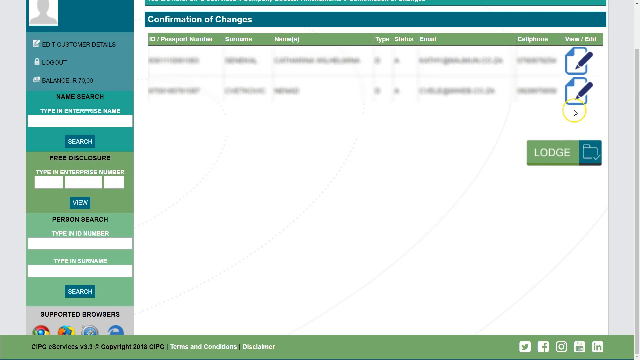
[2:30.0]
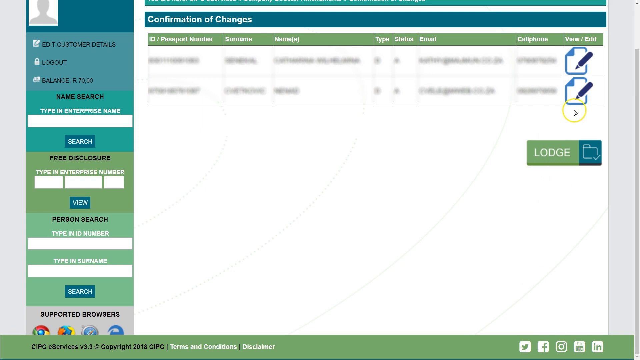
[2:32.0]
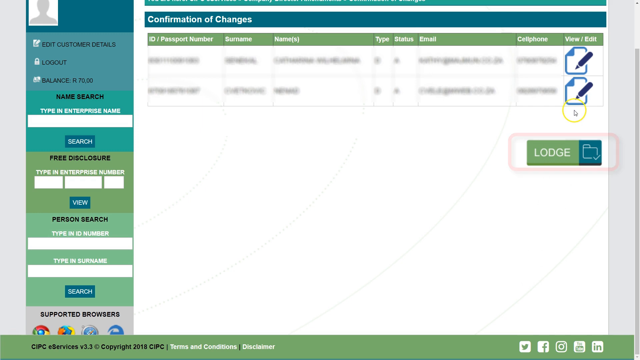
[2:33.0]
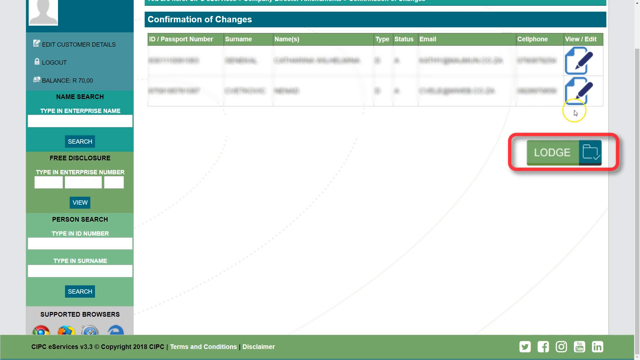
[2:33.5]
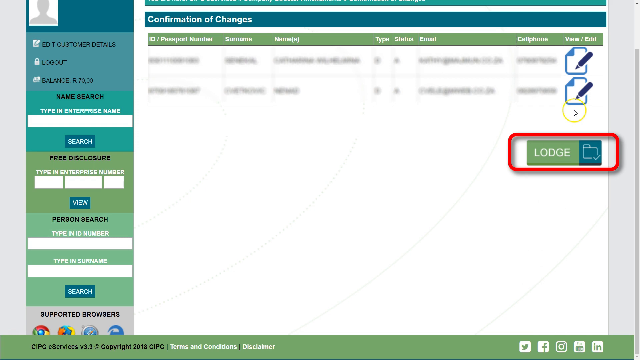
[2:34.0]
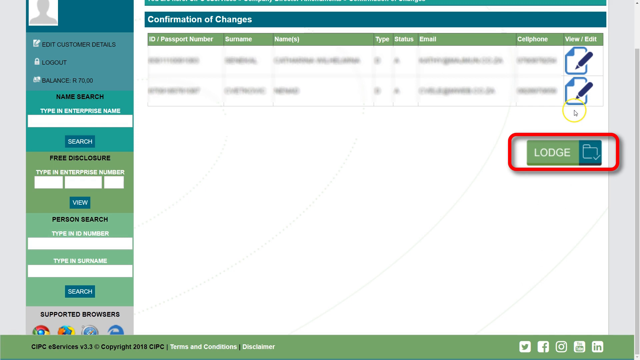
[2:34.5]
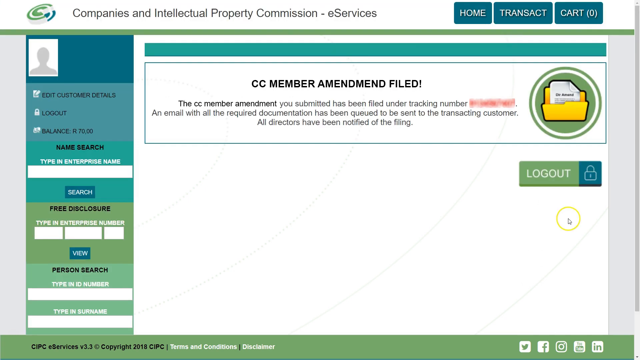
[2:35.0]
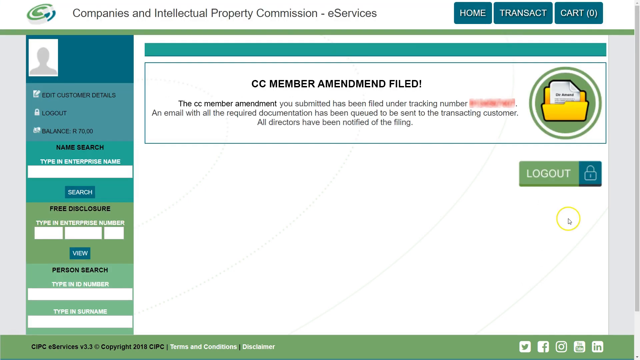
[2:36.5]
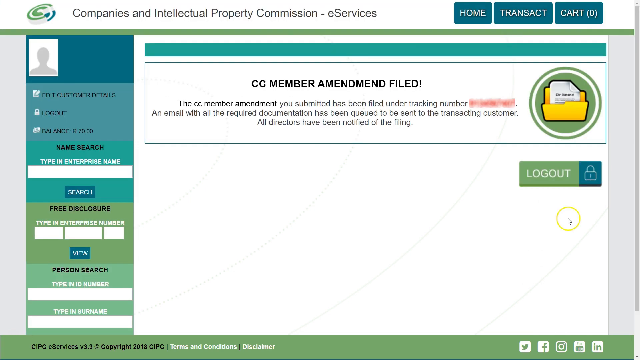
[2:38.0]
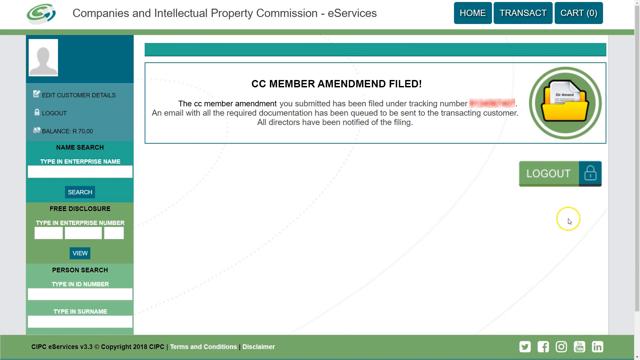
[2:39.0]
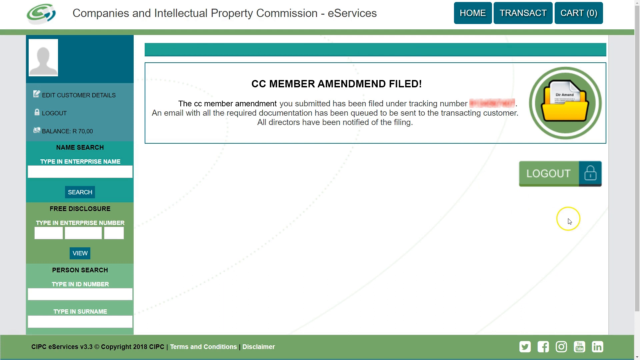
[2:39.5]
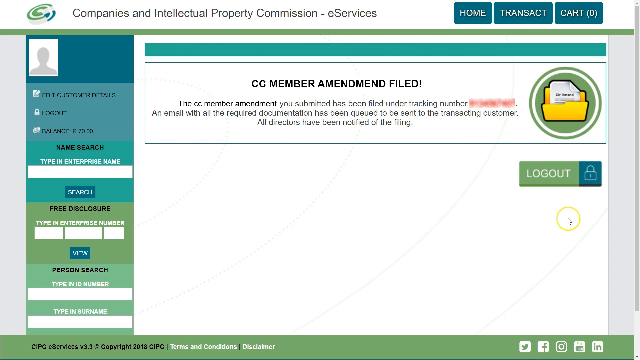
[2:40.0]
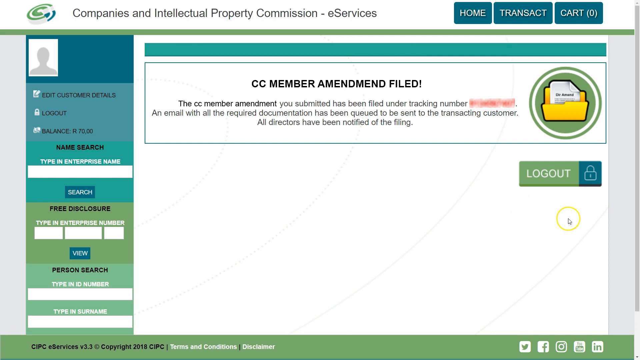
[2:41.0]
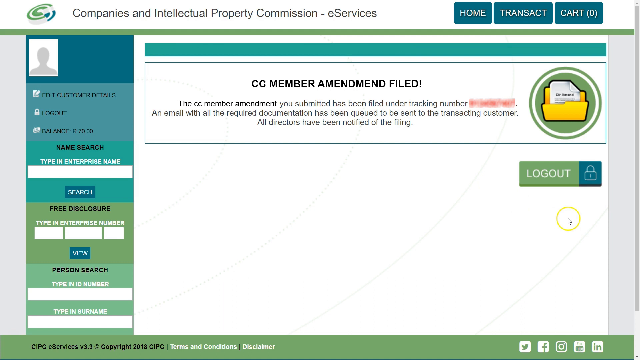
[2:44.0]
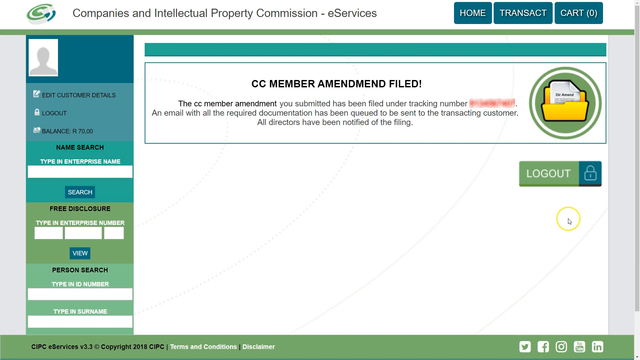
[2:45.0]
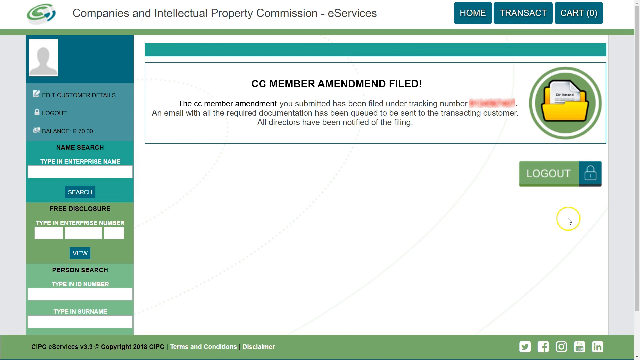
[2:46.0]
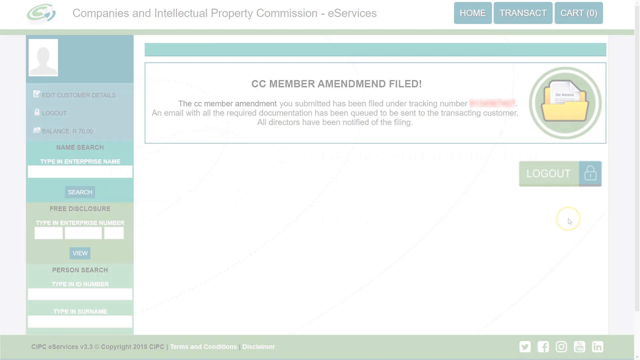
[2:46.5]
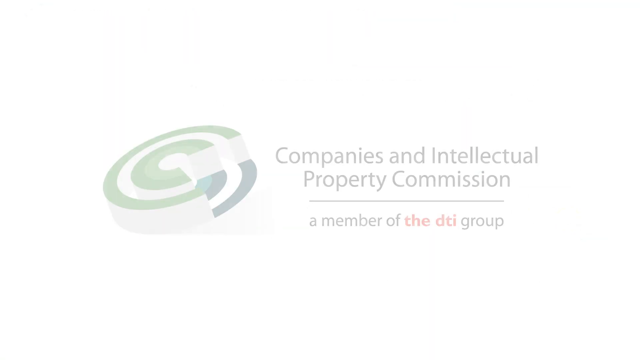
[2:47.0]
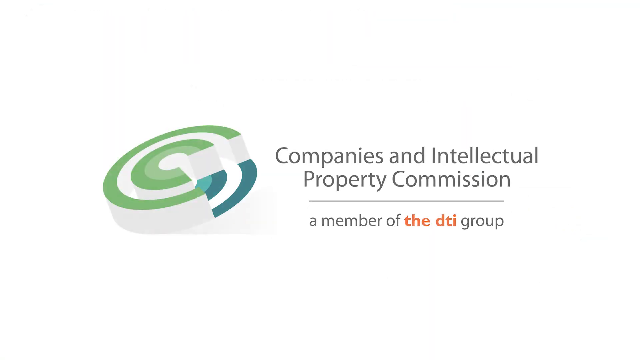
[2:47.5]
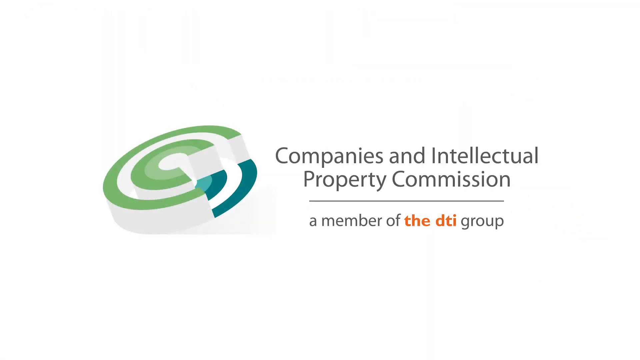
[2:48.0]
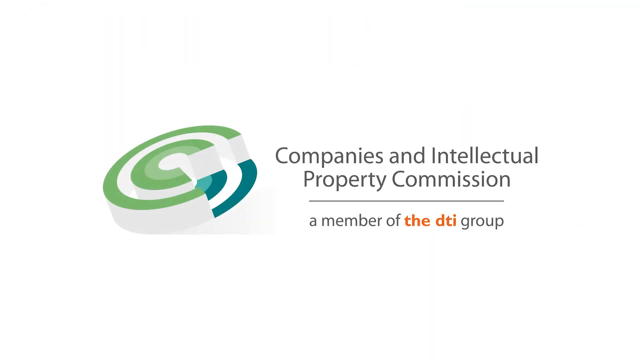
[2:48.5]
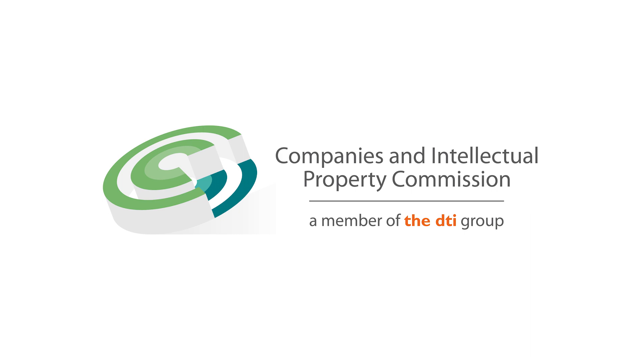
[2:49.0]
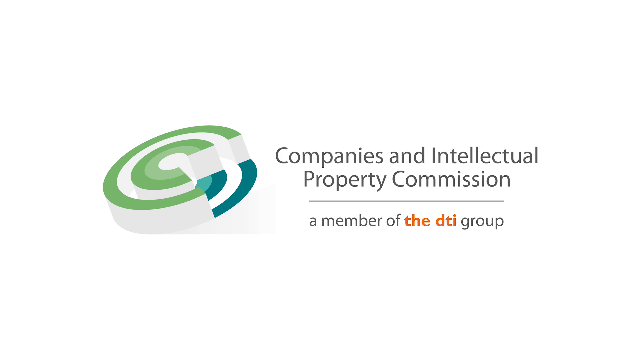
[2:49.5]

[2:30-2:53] An e-services confirmation page reads "Companies and Intellectual Property Commission e-services," with home, transaction, and cart buttons in the upper right-hand corner. It identifies the Companies and Intellectual Property Commission as a member of the CDI committee or group. On the left side is a vertical column in green and blue, with a profile picture in the upper left-hand side. One section offers search with a free disclosure, another offers view person search, and a third bar at the very bottom says "Search." Beneath that last search bar, supported services are shown as icons. Text reads "CC member amended filed," next to a yellow file with a piece of paper in a circle. There is a log out option in green and an icon that may be a lock.